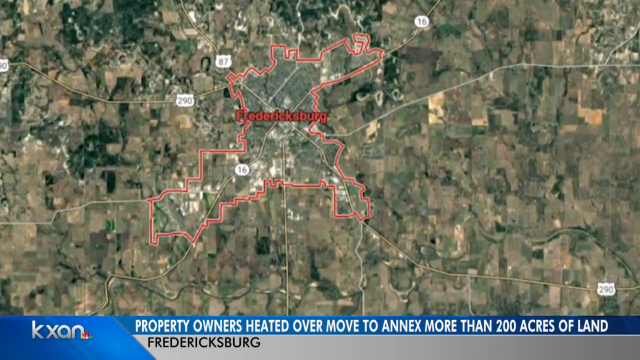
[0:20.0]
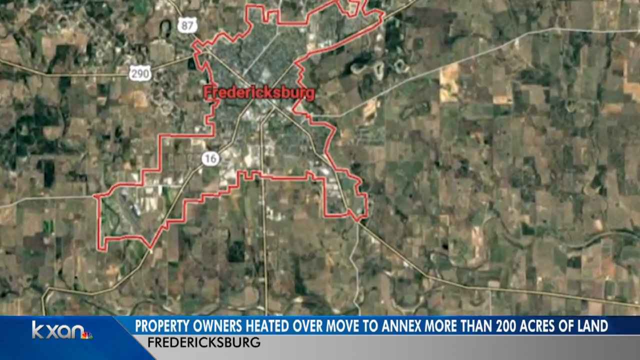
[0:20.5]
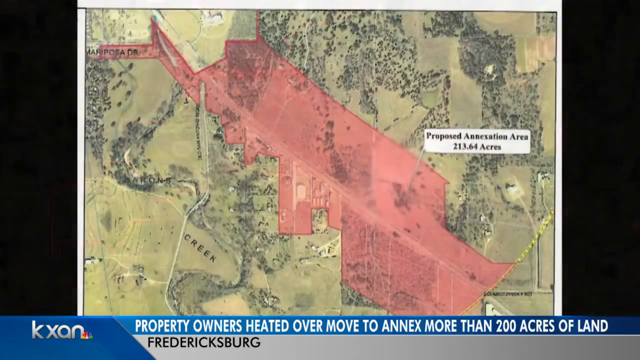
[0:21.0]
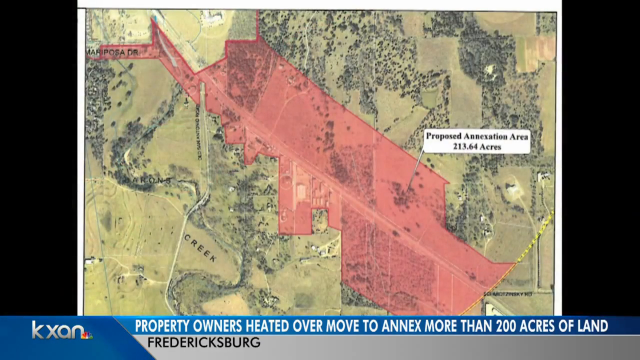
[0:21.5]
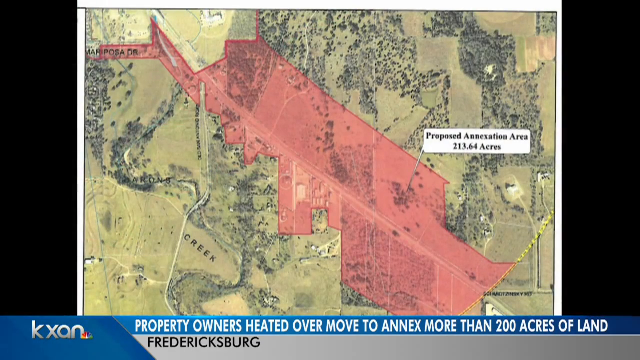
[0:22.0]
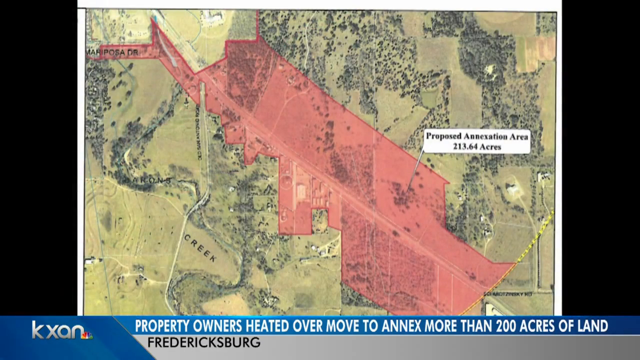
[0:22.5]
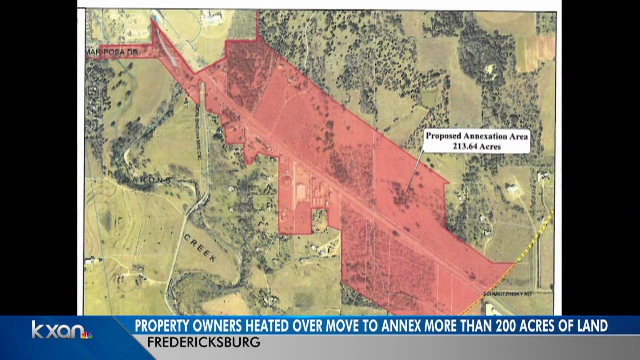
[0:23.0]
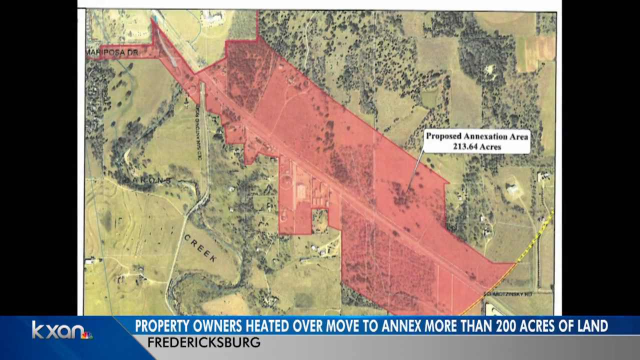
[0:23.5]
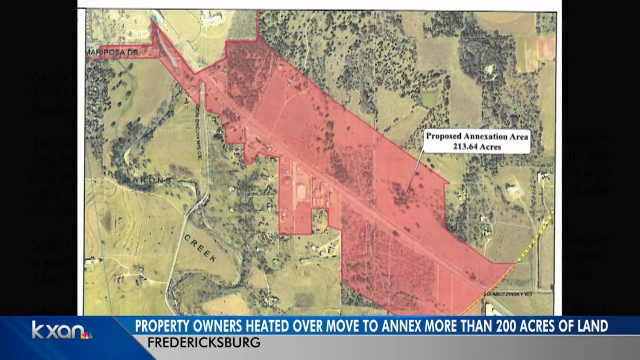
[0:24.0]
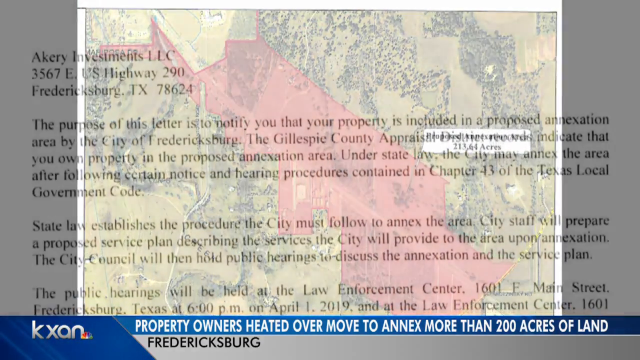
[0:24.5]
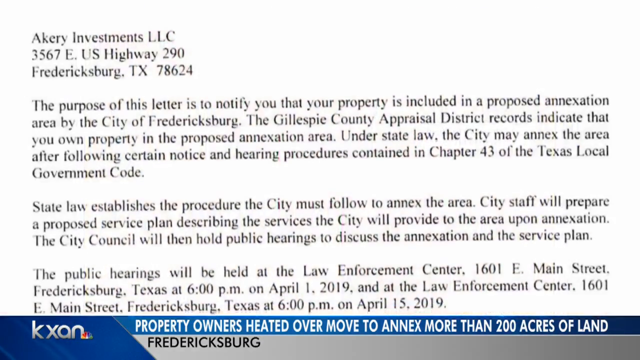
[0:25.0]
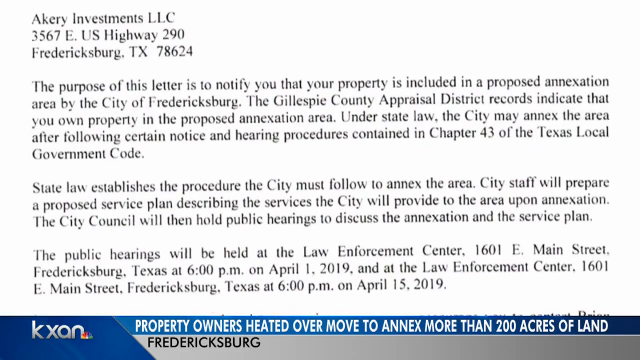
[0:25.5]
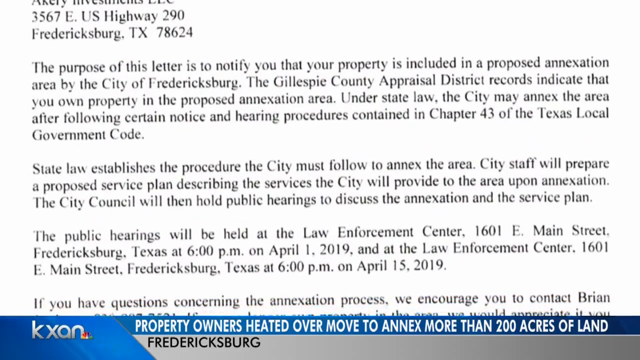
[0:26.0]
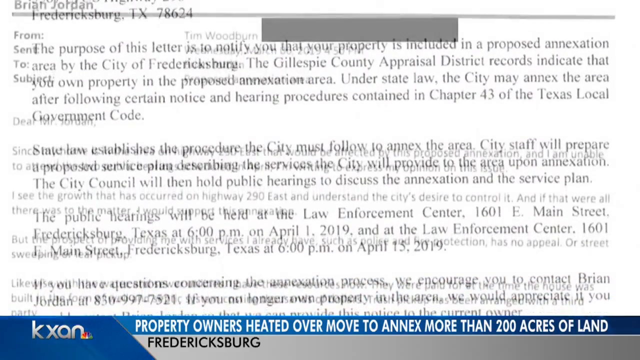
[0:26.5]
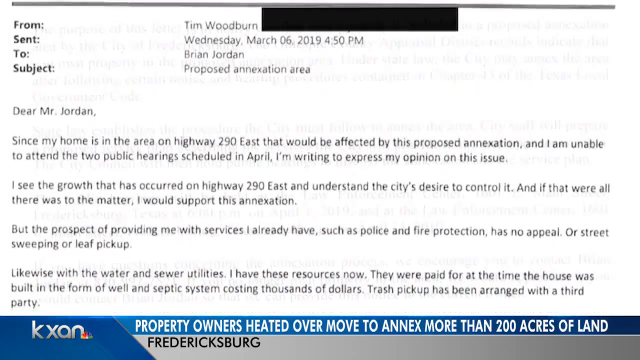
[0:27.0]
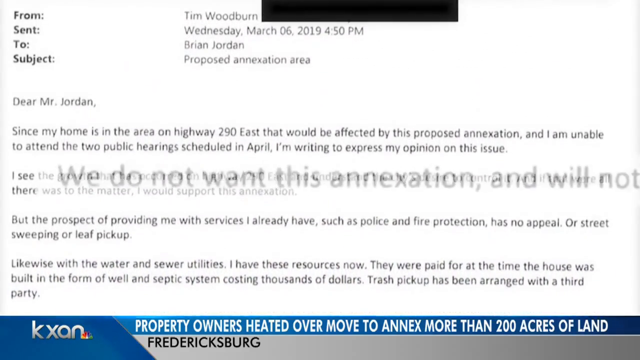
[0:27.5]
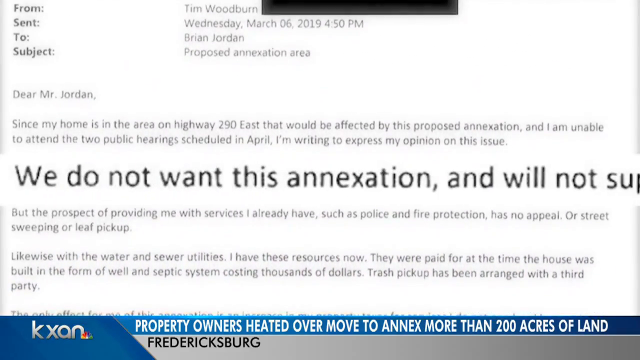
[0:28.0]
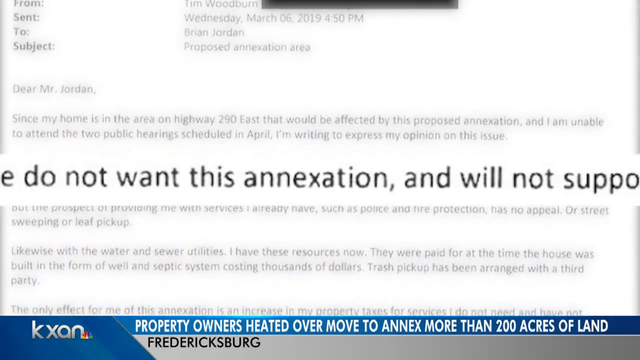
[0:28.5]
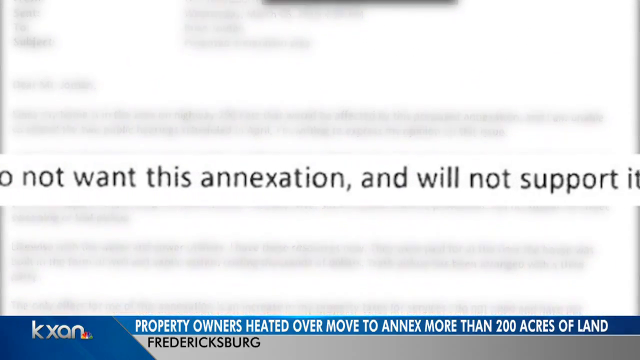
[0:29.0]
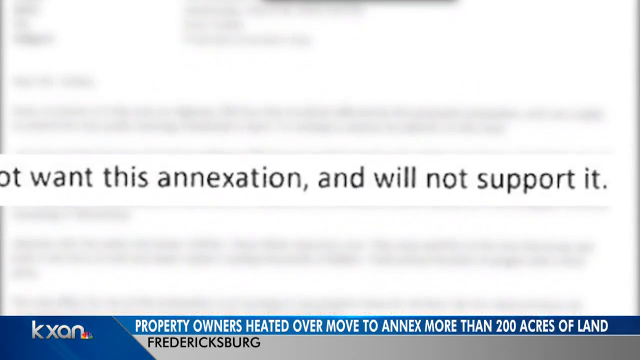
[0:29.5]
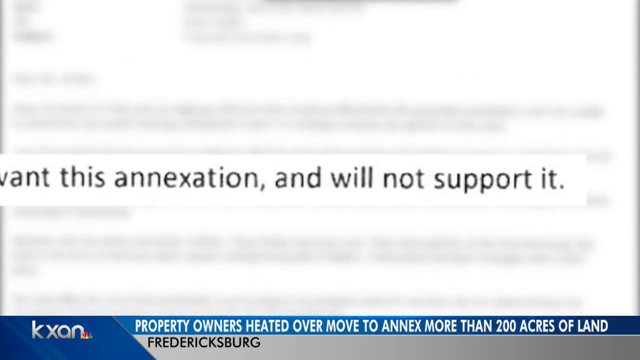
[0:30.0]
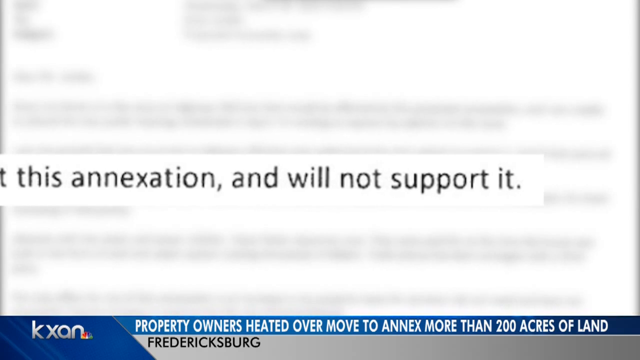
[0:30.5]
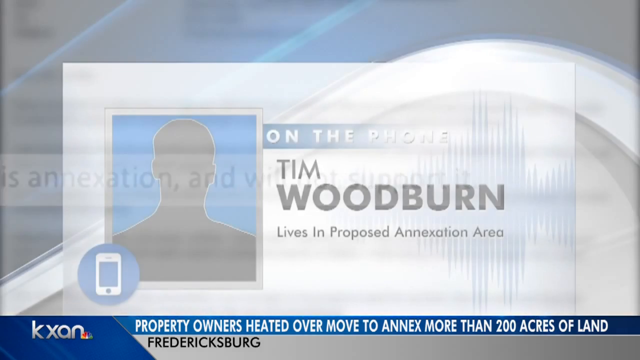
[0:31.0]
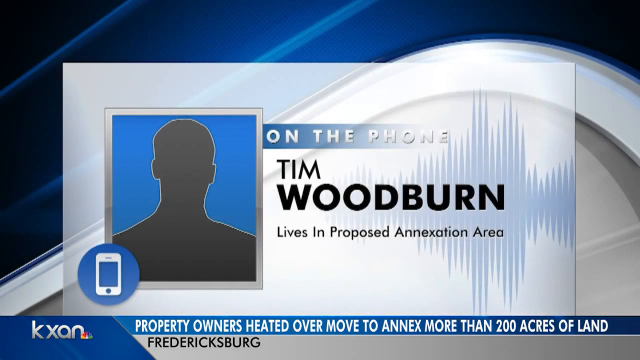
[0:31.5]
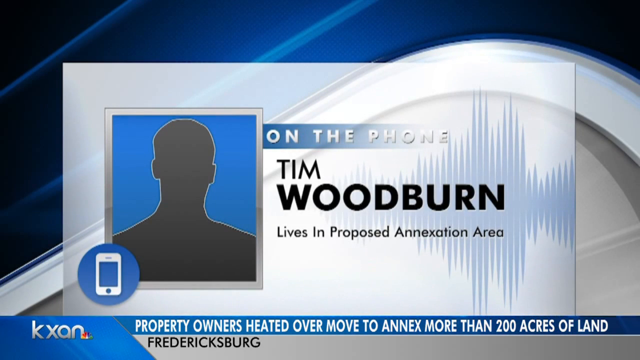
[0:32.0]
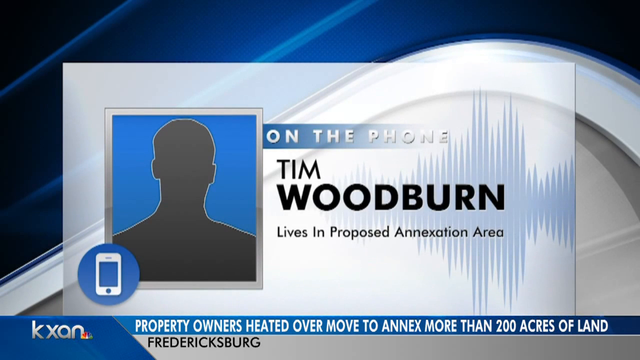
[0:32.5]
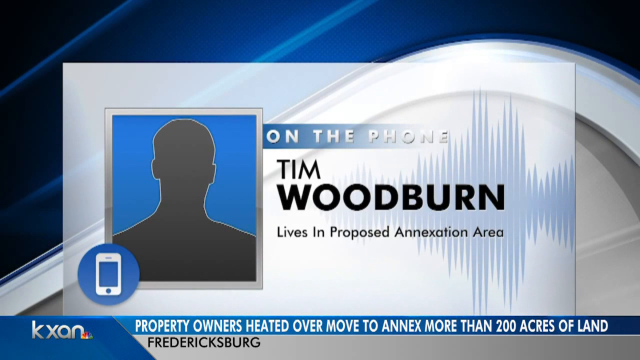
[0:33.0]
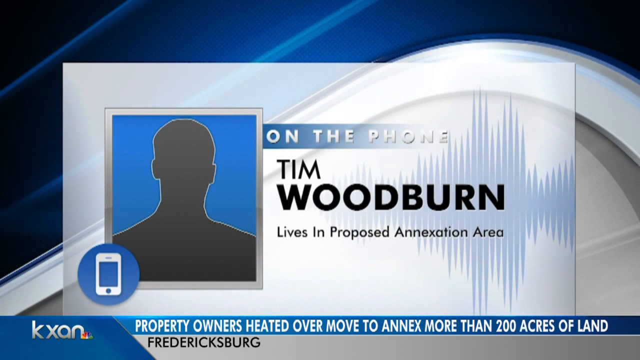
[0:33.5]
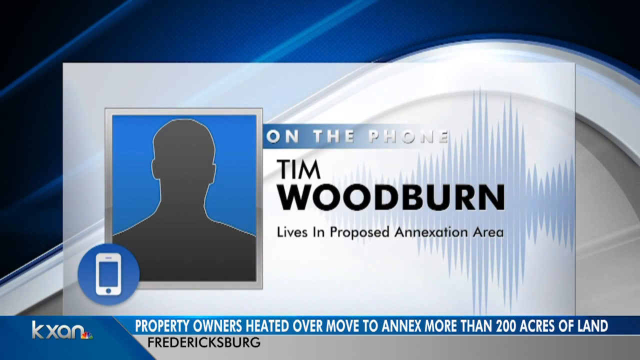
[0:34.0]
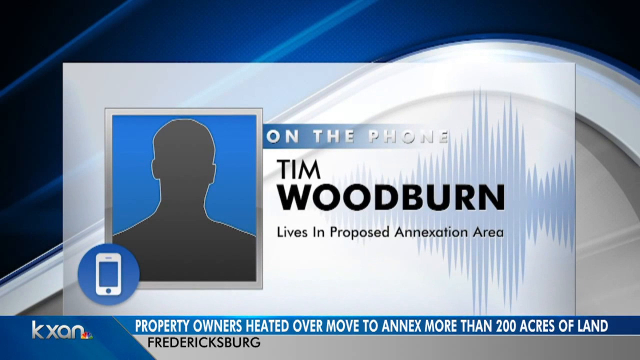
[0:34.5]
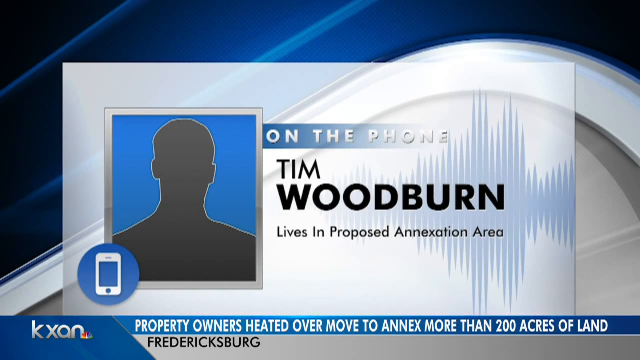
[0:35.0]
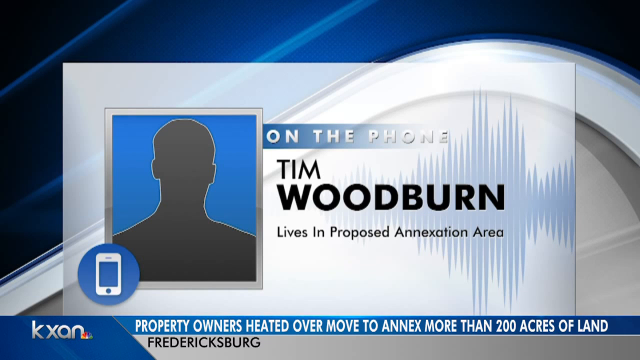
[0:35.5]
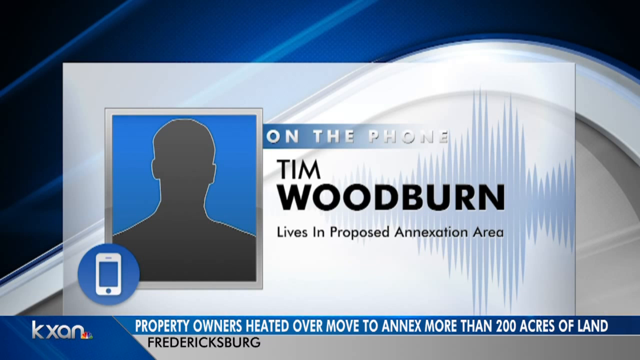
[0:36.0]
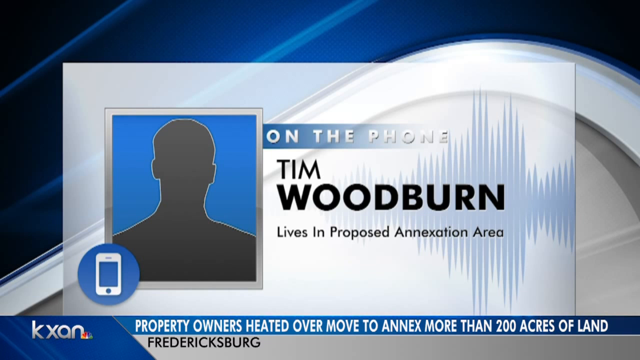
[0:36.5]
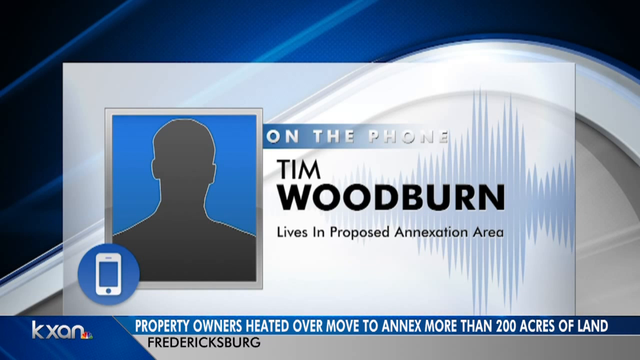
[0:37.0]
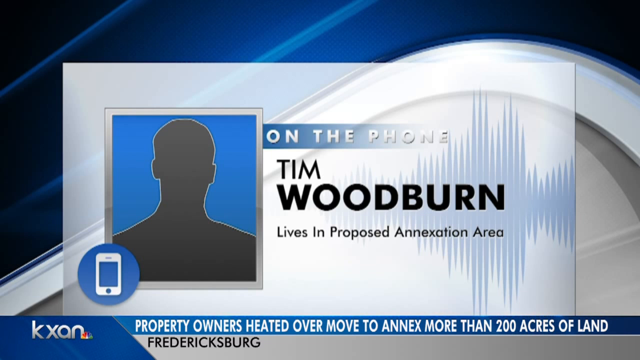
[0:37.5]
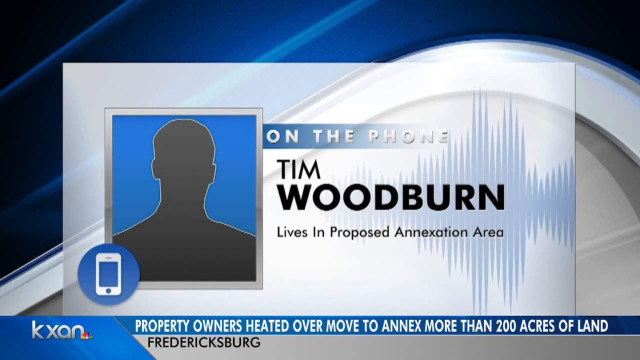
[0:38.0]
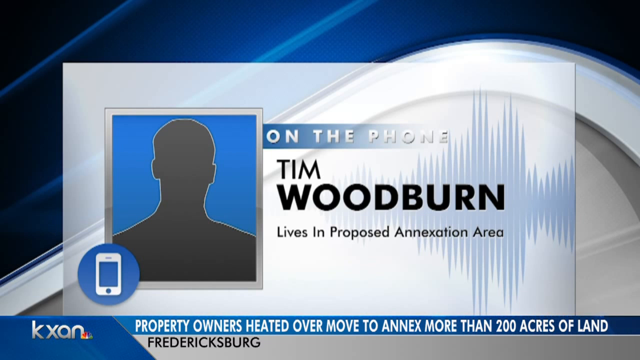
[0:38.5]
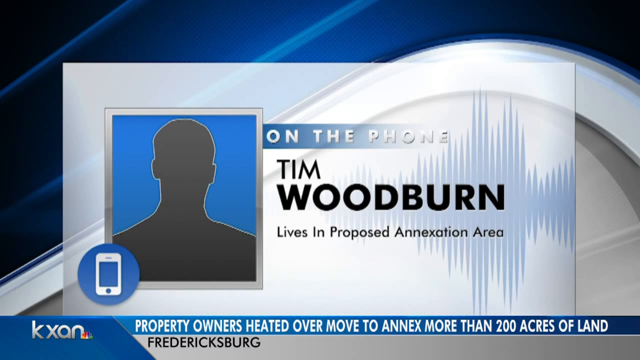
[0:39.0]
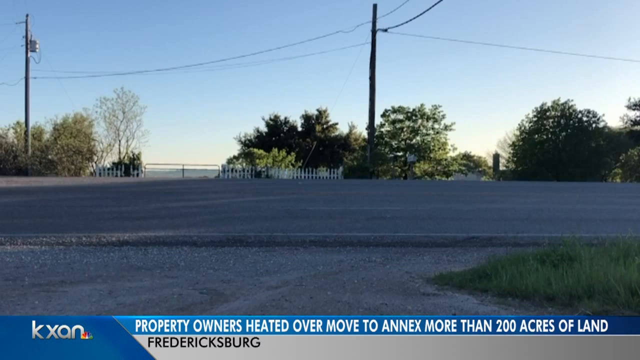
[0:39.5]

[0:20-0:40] A portion of the map is highlighted and outlined in red. Text at the bottom of the screen reads "property owners heated over move to annex more than 200 acres of land in Fredericksburg." Another map shows a green area with many trees, with a large portion highlighted in red and the text "proposed annexation area, 213.64 acres." The video then cuts to what looks like a document mentioning acreage, which reads "in a proposed annexation area by the city of Fredericksburg. The Gillespie County Appraisal District records indicate that you own property in the proposed annexation area. Under state law, the city may annex the area after following certain notice and hearing procedures contained in Chapter 43 of the Texas Local Government Code. State law establishes the procedure a city must follow to annex the area. City staff will prepare a proposed service plan describing the services the city will provide to the area upon annexation."